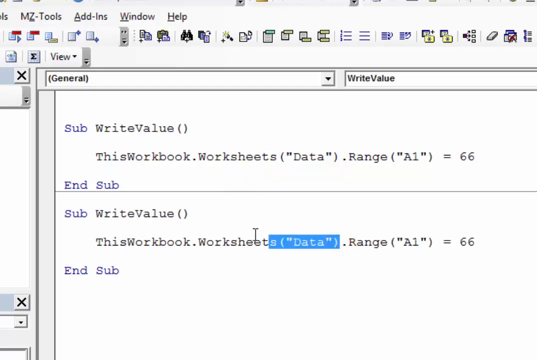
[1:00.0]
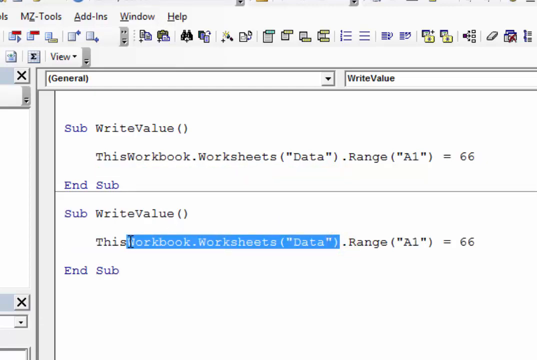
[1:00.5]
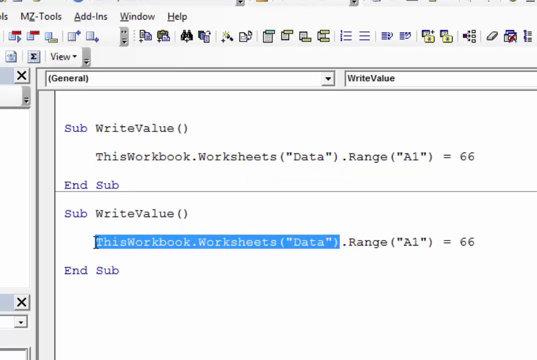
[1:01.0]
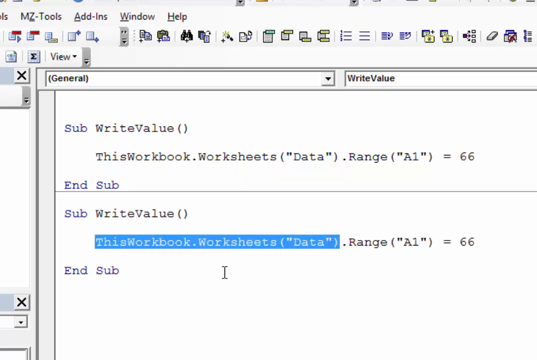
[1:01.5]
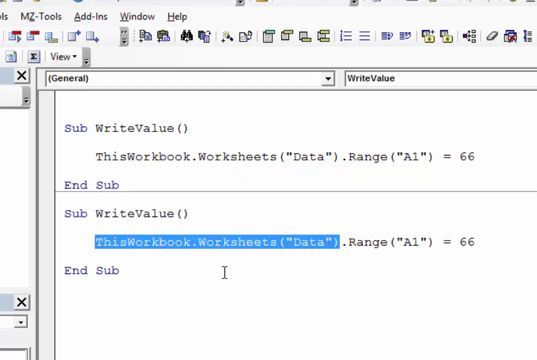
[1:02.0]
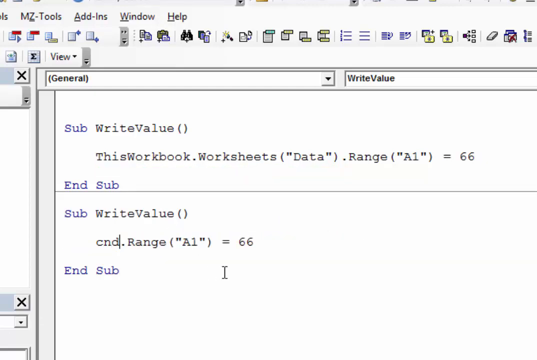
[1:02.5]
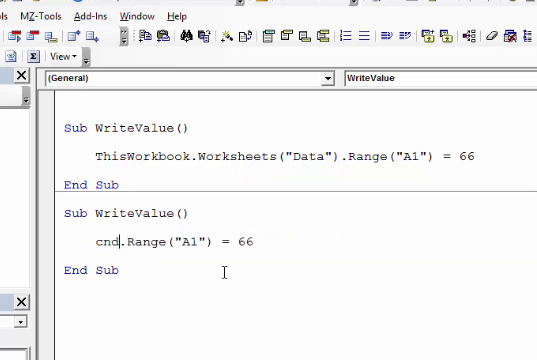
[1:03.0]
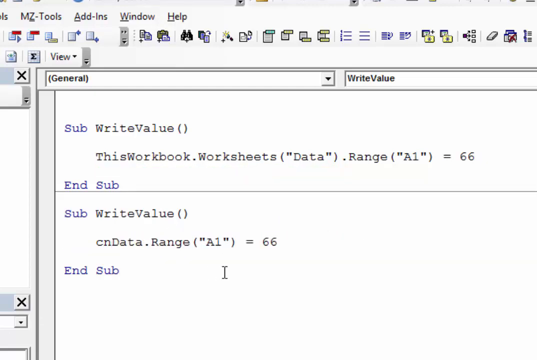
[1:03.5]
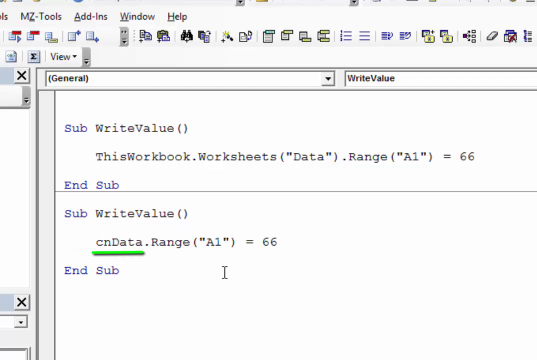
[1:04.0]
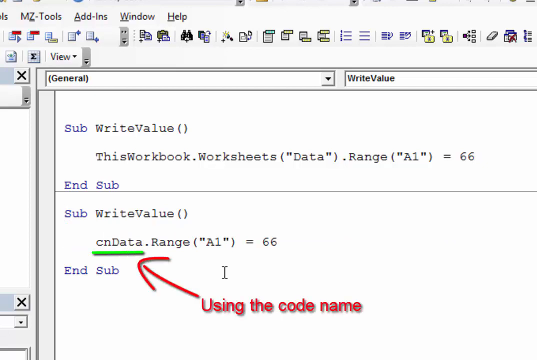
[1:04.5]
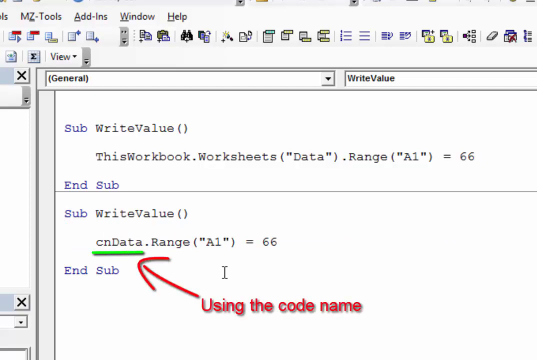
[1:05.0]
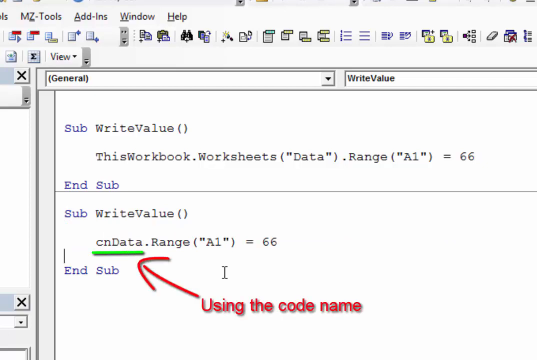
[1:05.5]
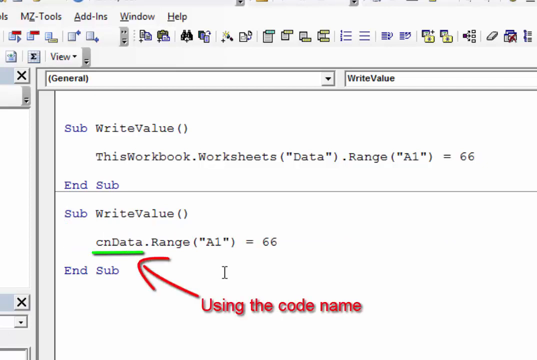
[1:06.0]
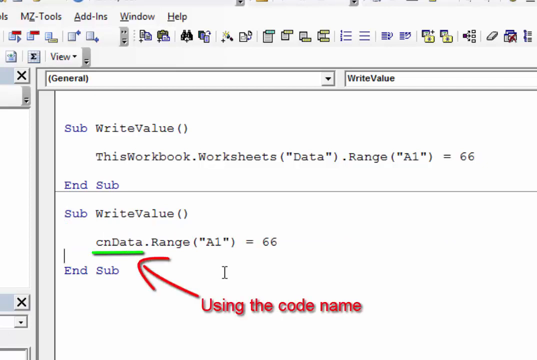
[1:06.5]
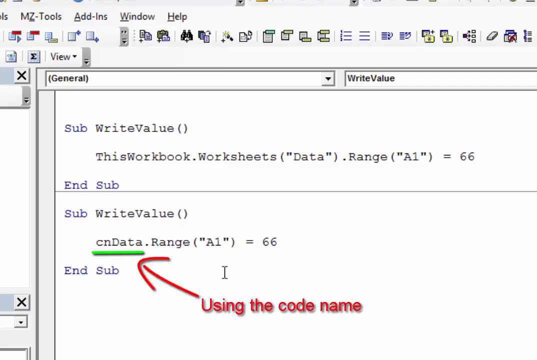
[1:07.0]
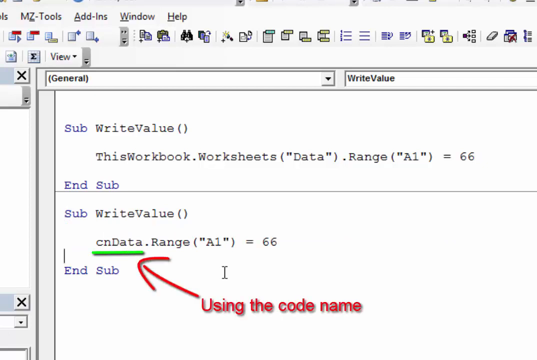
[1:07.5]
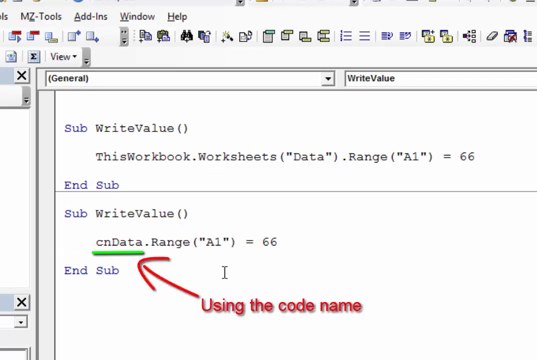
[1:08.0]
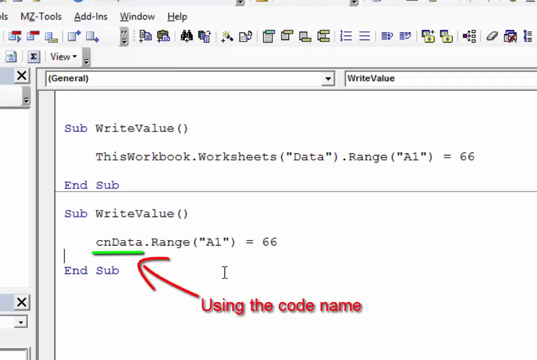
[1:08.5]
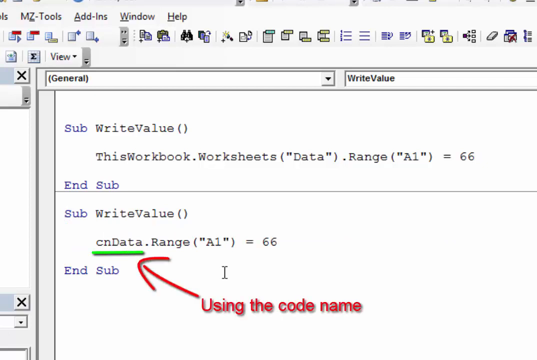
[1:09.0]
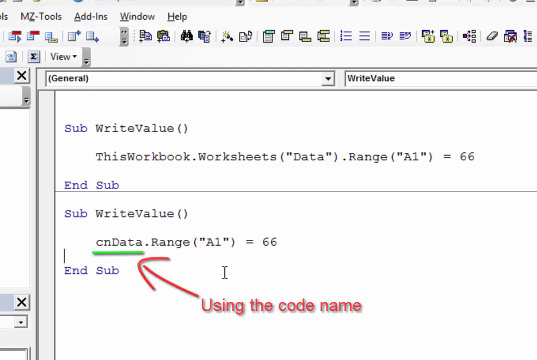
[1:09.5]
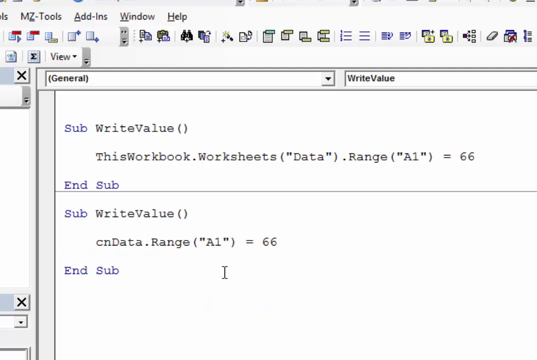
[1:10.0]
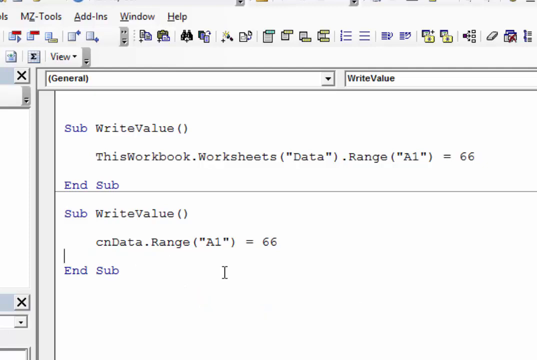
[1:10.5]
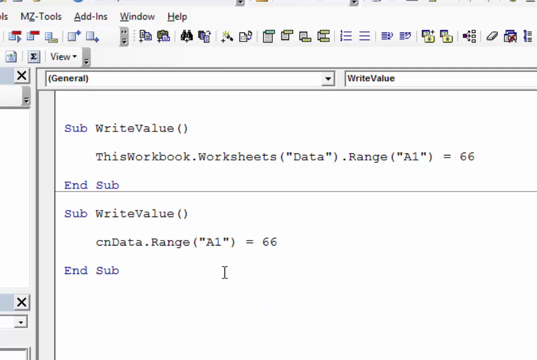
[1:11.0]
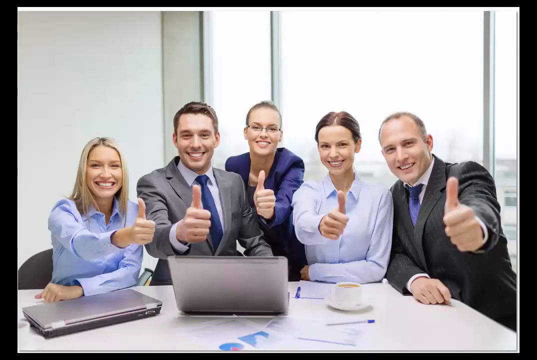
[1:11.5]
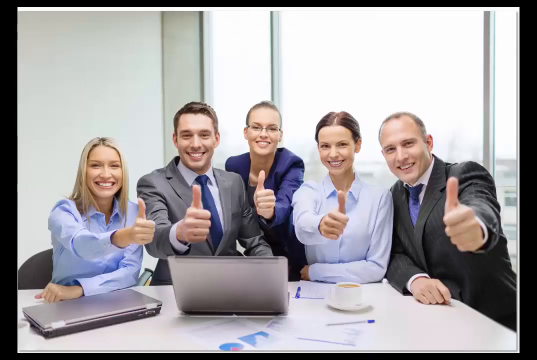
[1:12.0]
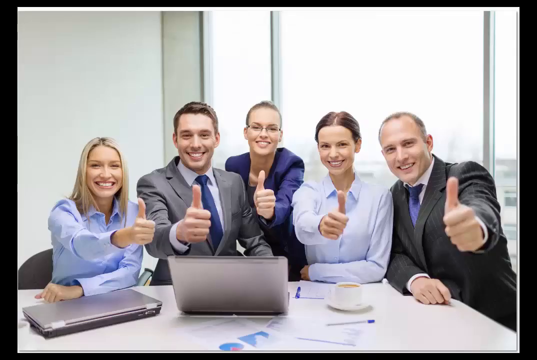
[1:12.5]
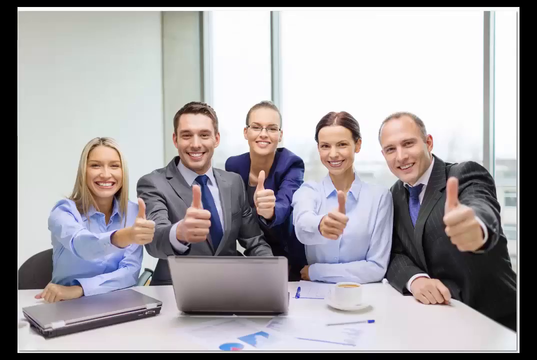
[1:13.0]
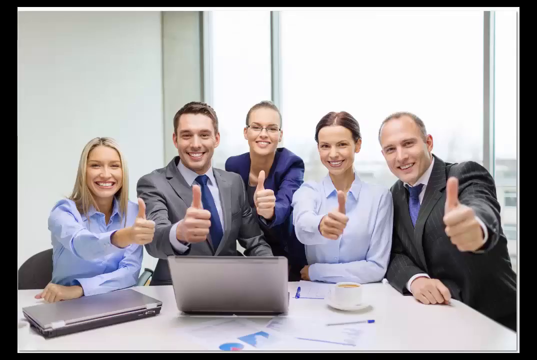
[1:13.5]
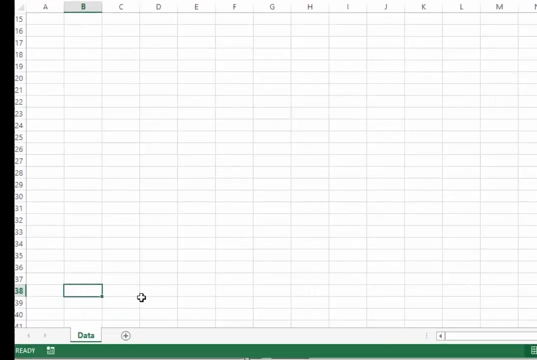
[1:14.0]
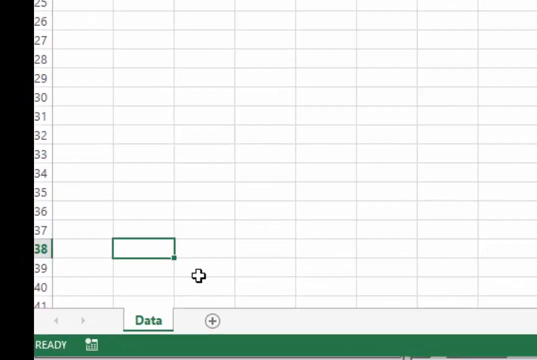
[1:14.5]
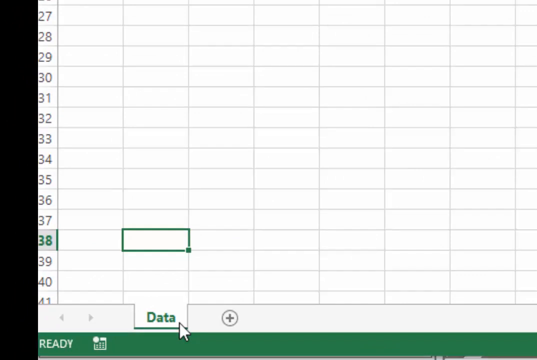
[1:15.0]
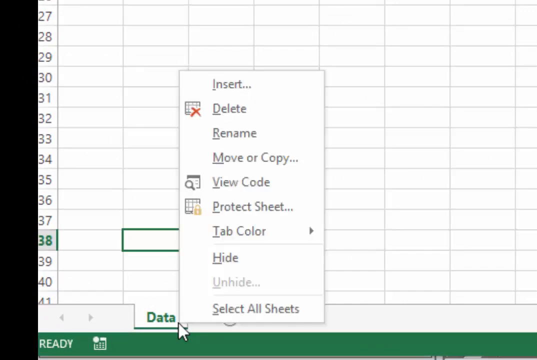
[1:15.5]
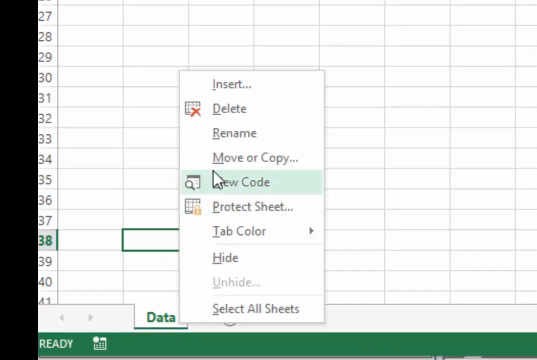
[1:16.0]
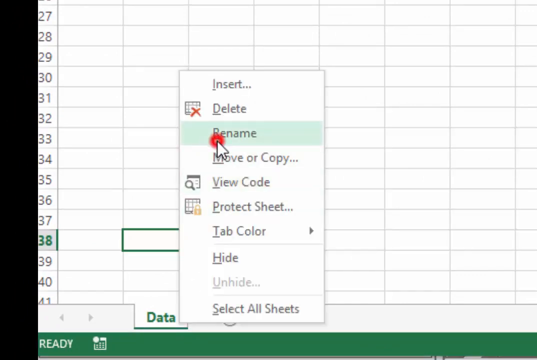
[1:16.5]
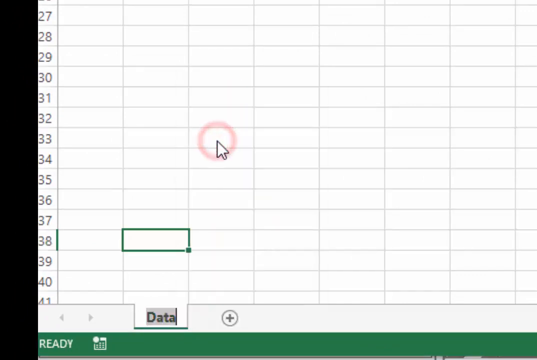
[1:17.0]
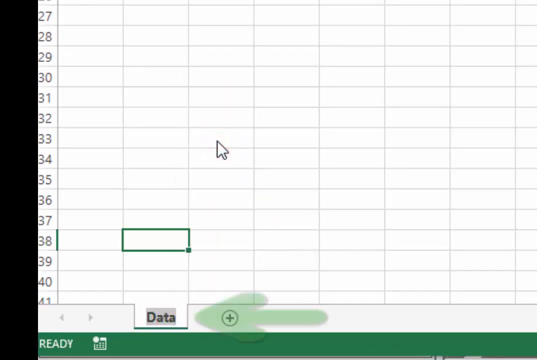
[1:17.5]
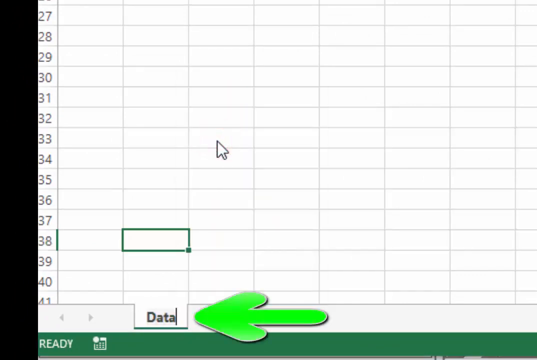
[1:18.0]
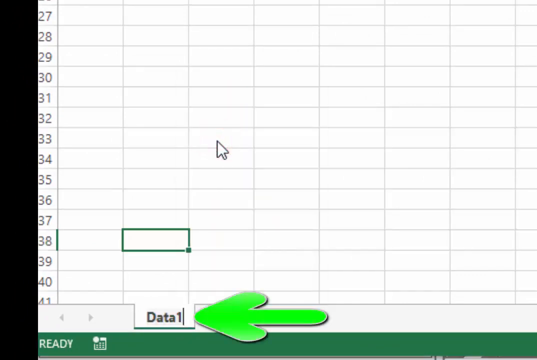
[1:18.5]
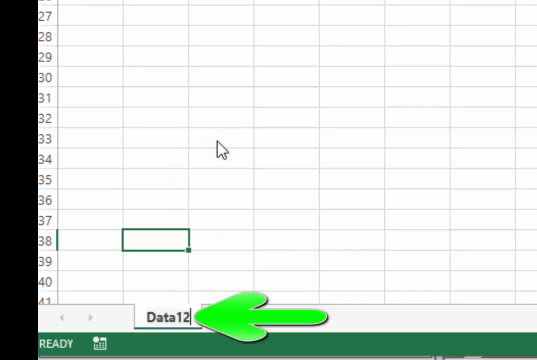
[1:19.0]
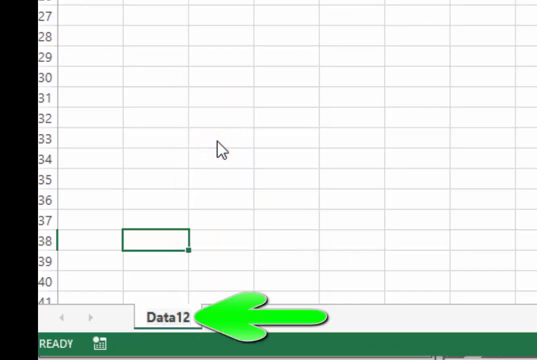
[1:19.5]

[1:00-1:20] The same code is shown: a sub with brackets, then a line referencing the worksheets collection with "data" and ".range" with A1, setting it to a value. Repeated information appears in another column, and a line sets A1 on the data sheet equal to 66. The code name is used in the code.